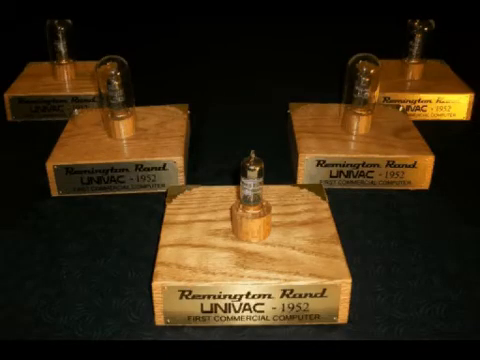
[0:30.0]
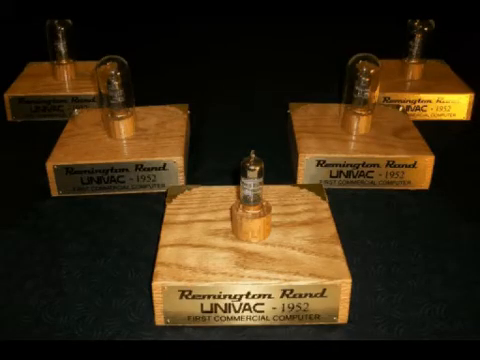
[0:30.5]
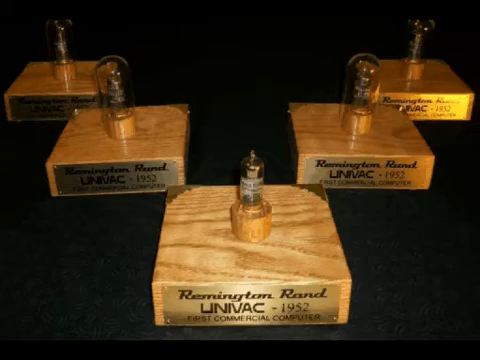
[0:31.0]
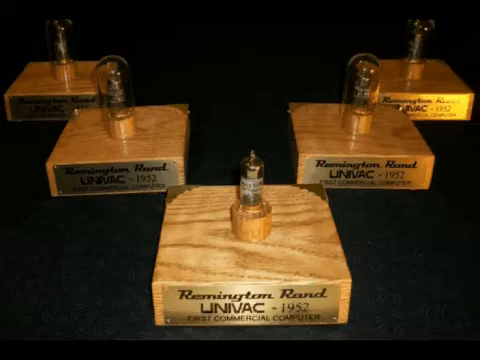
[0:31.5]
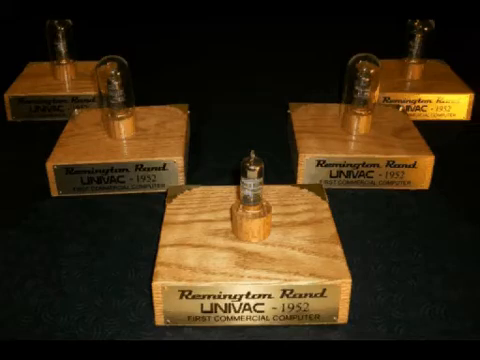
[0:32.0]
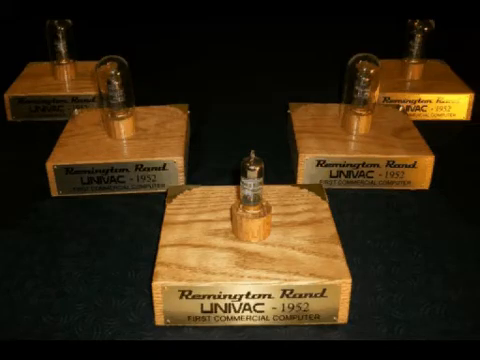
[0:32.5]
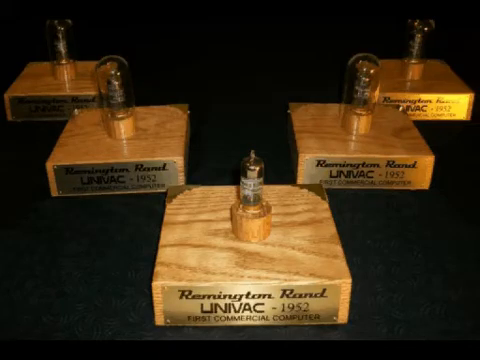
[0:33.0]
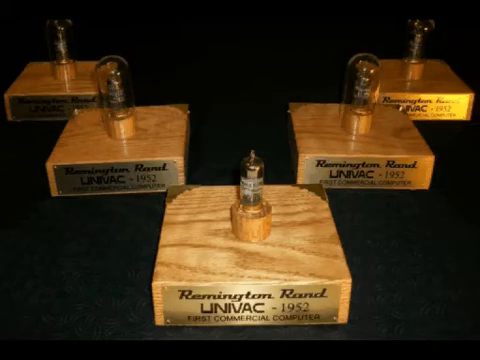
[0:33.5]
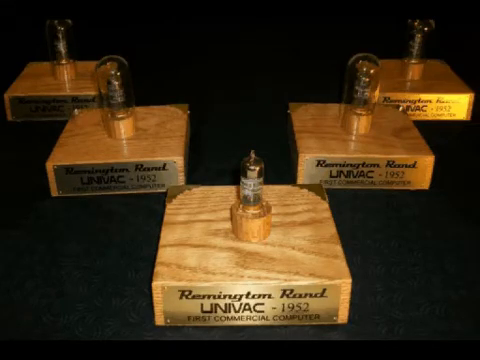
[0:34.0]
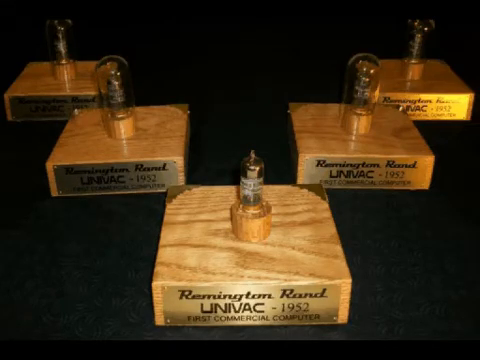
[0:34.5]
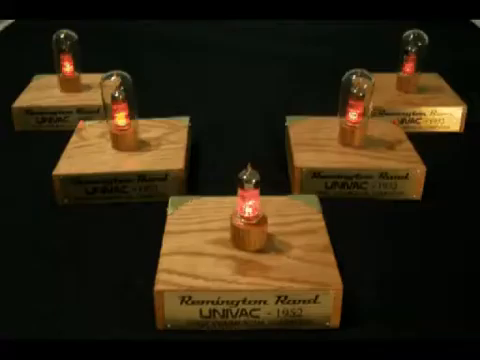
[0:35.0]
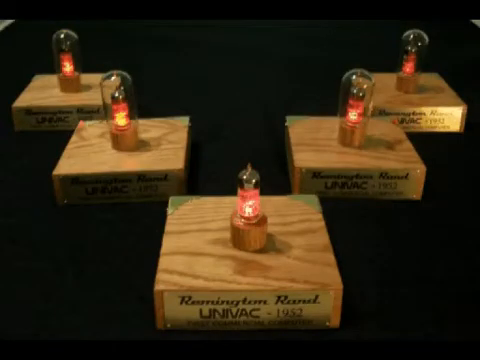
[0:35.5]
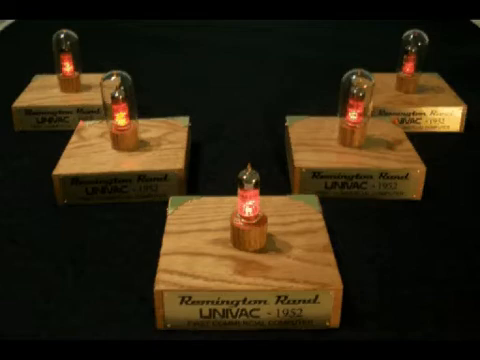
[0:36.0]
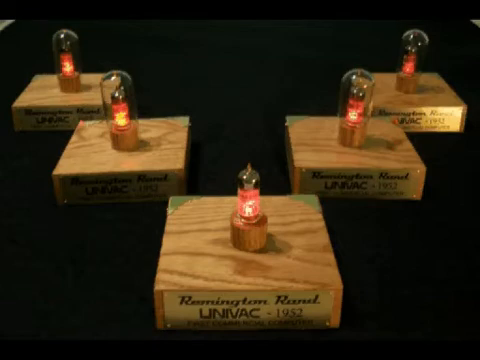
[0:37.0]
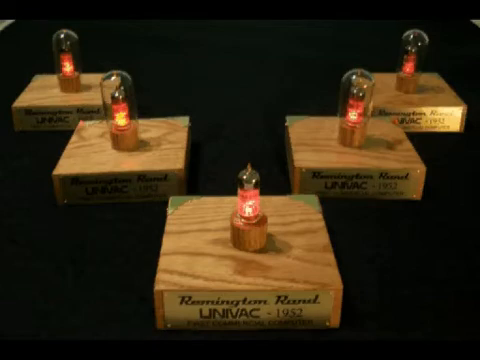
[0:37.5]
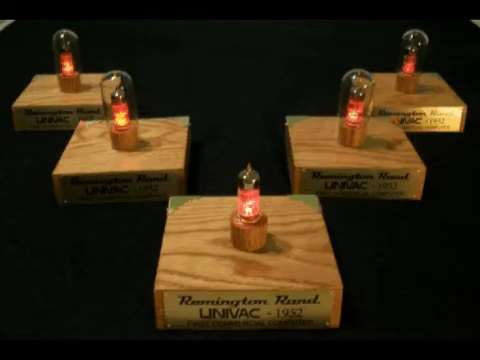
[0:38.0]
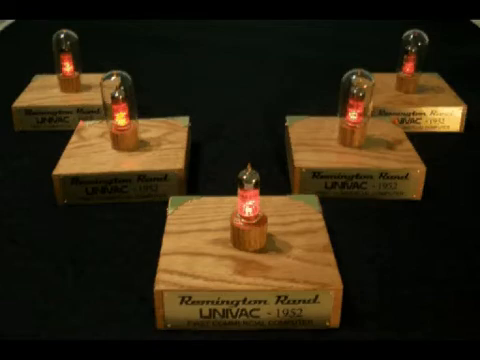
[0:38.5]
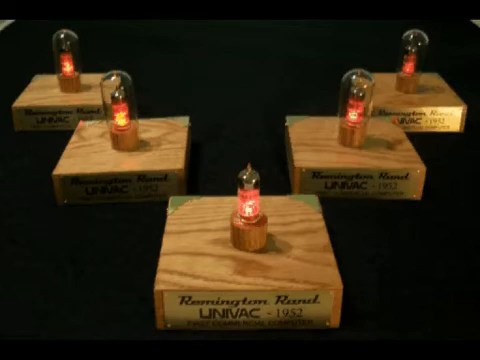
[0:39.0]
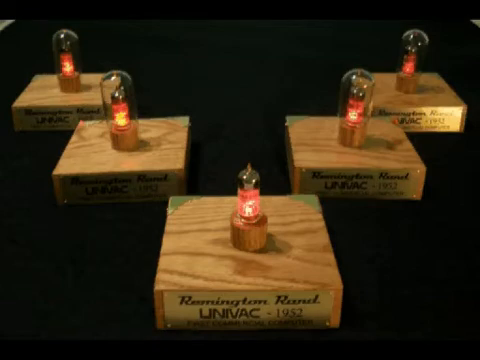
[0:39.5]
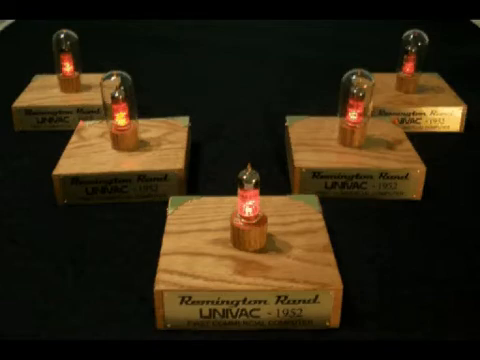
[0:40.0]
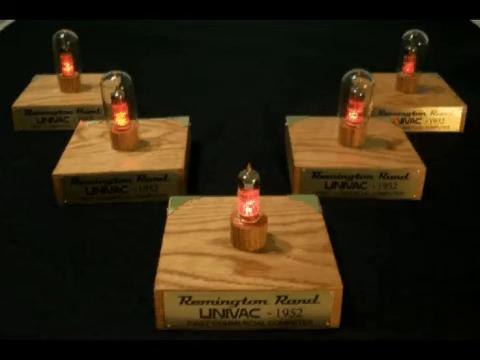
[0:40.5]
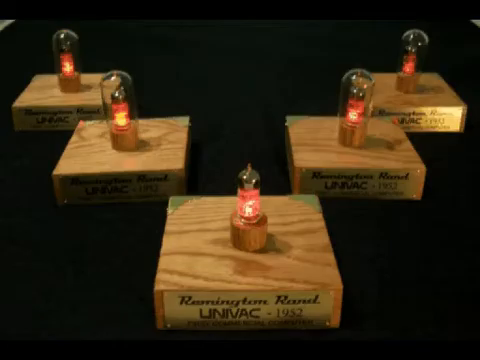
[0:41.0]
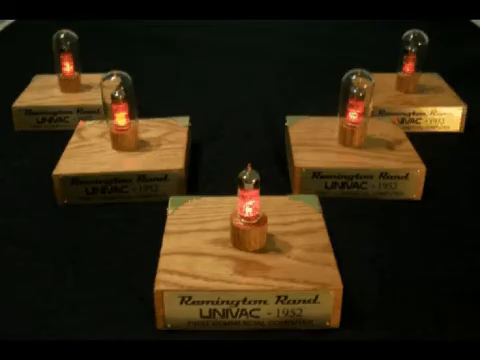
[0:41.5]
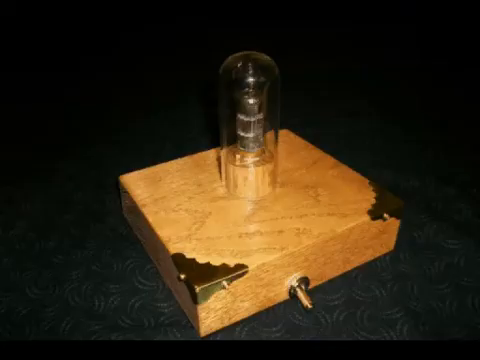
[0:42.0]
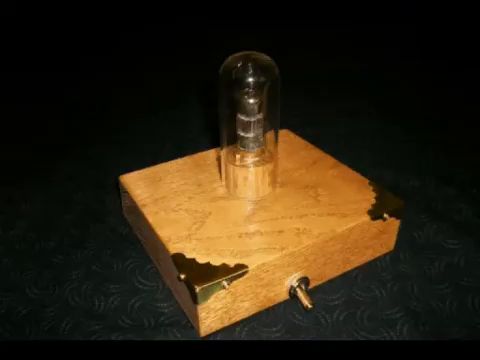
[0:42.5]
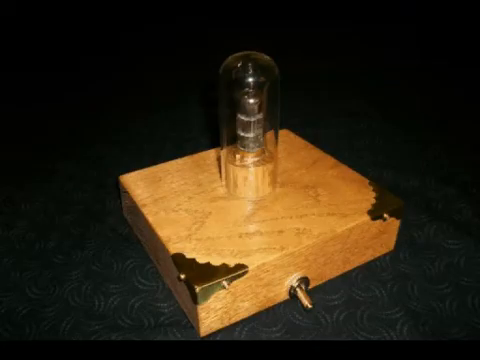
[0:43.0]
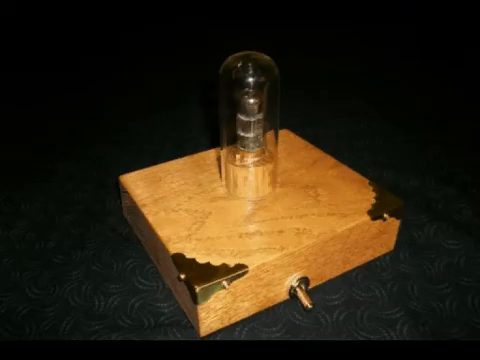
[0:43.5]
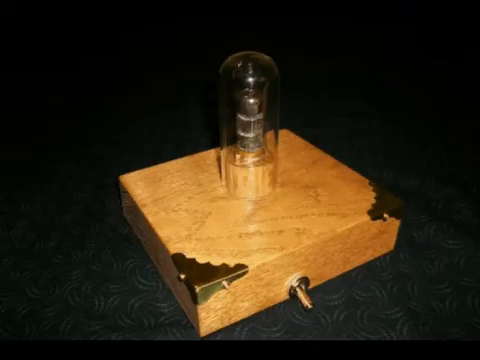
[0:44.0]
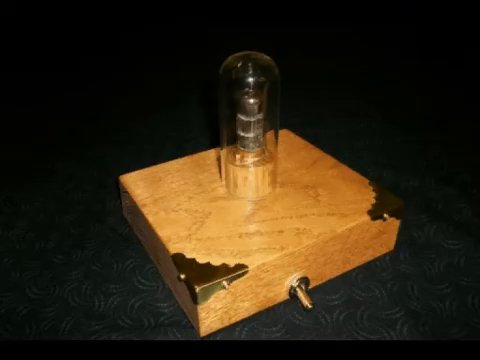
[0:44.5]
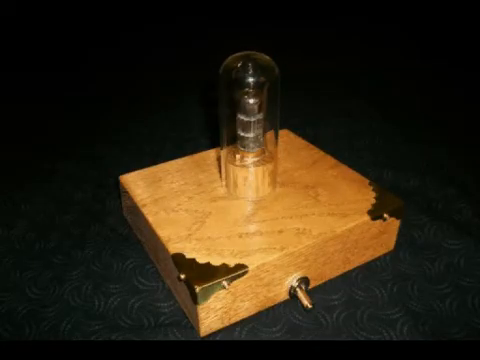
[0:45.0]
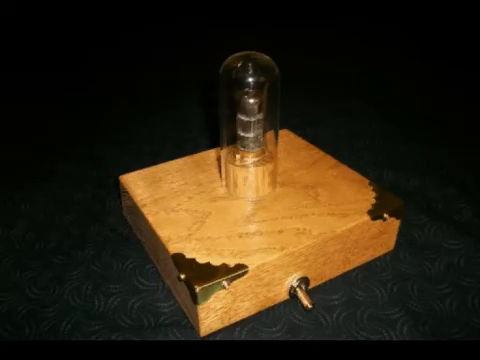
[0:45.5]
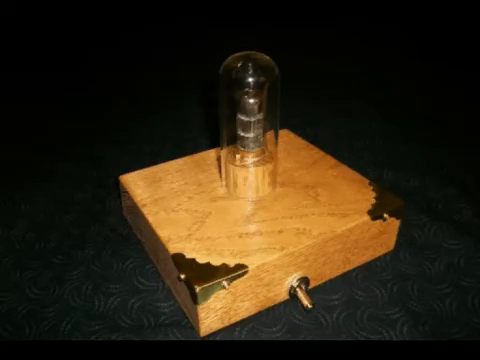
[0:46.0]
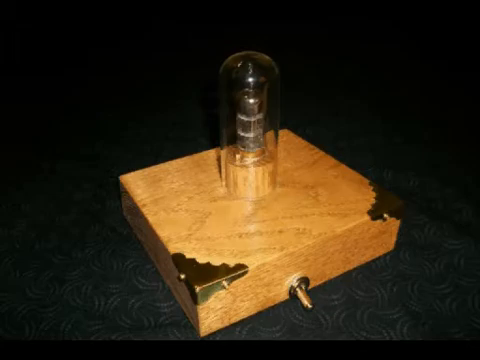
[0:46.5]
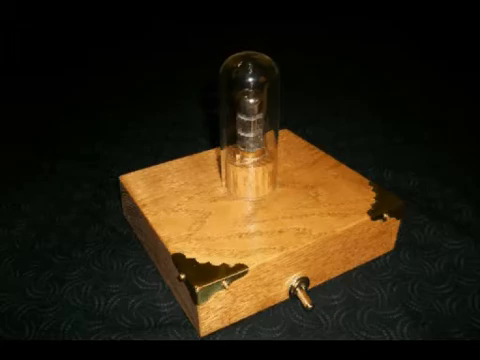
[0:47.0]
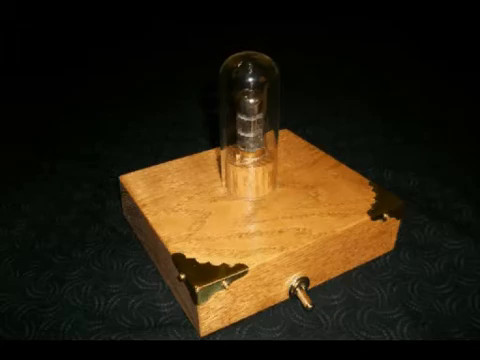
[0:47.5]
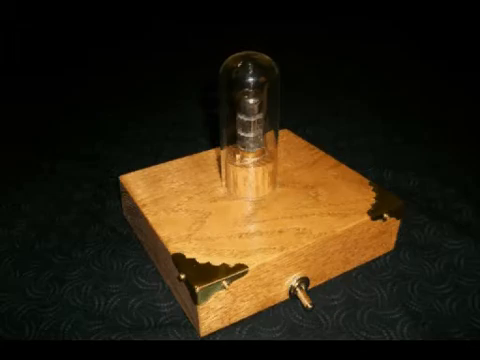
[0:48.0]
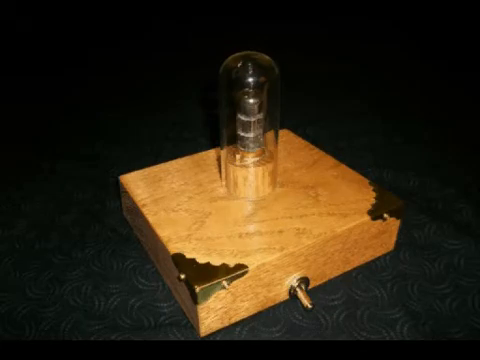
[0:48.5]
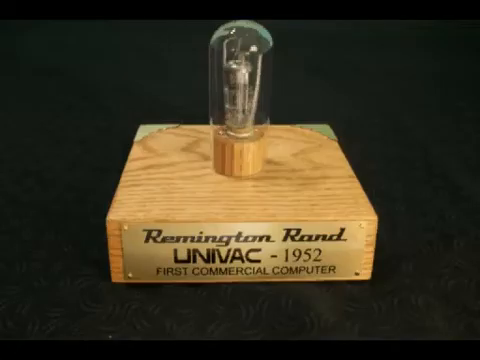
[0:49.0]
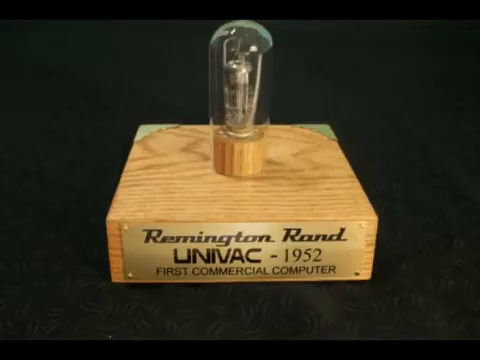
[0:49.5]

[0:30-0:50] Five stained blocks of wood, designed for display in something like a museum, are on a black background, possibly a table. A light overhead shines on them to illuminate them. Each block has a brass plate on the front with three lines of text in black font: the top row reads "Remington Rand" in italics or cursive, the second row reads "UNIVAC-1952" in all caps, and the third row reads "FIRST COMMERCIAL COMPUTER" in all caps. Each plate is attached with a screw in each corner, four screws in all. The blocks are arranged in three rows: one in the front, two behind it off to the corners, and two more behind those. The bulbs are not illuminated at first, and then all the lights are lit, showing that they actually work. The video then shows a single block from the back, where a brass corner plate is screwed in and a toggle switch is toggled to the left while the light is not illuminated. The block is on top of dark carpet with swirls.